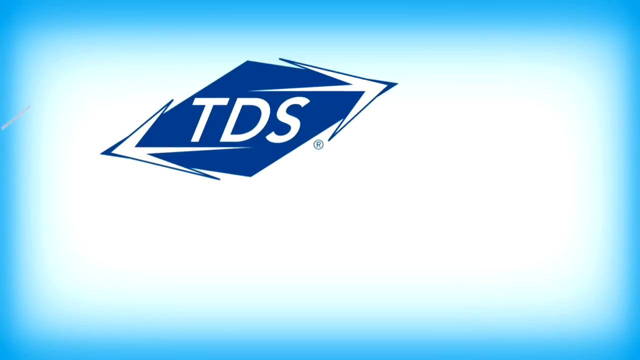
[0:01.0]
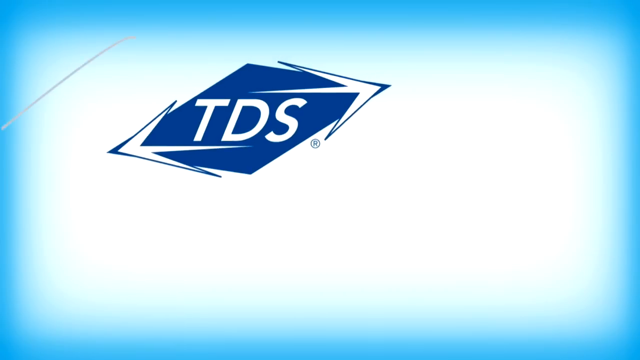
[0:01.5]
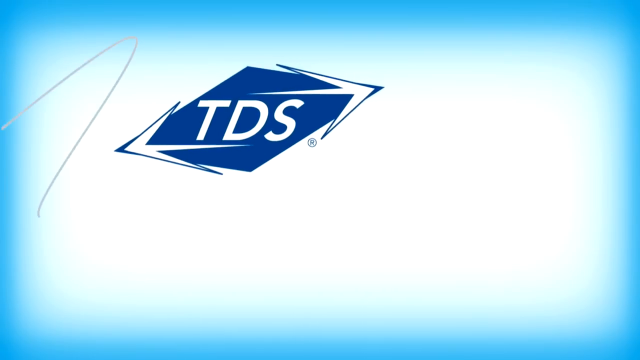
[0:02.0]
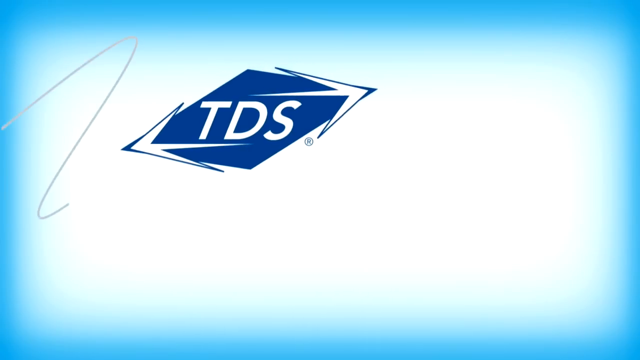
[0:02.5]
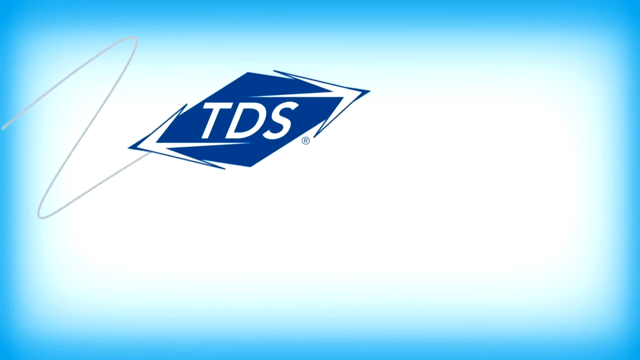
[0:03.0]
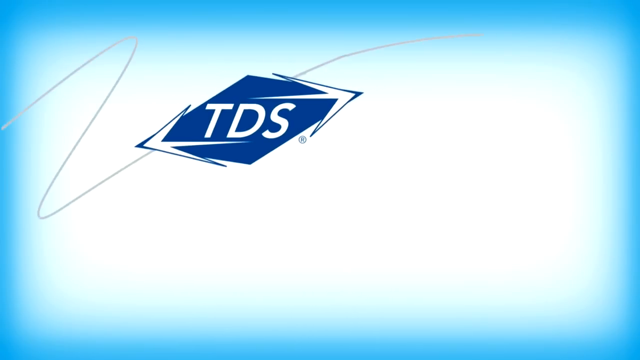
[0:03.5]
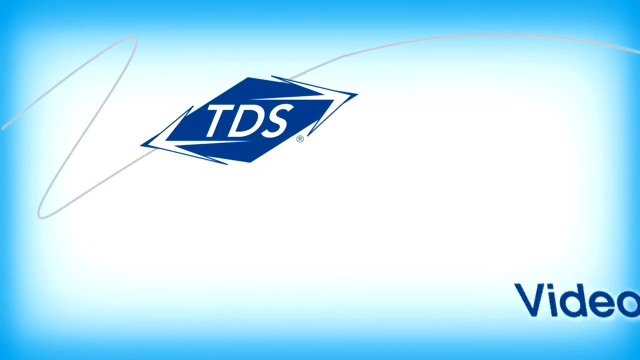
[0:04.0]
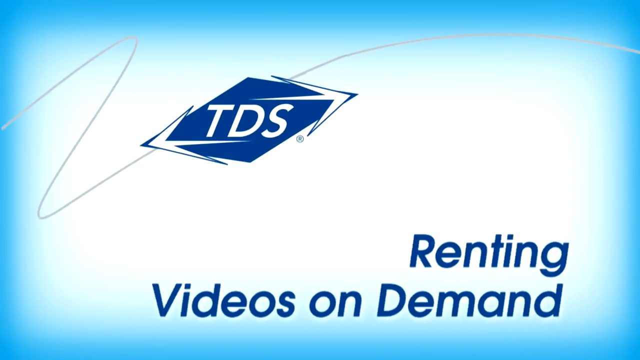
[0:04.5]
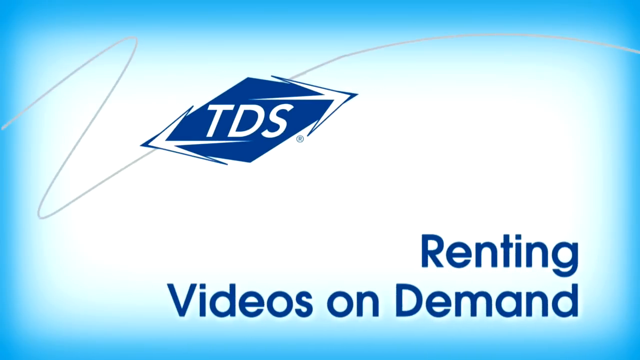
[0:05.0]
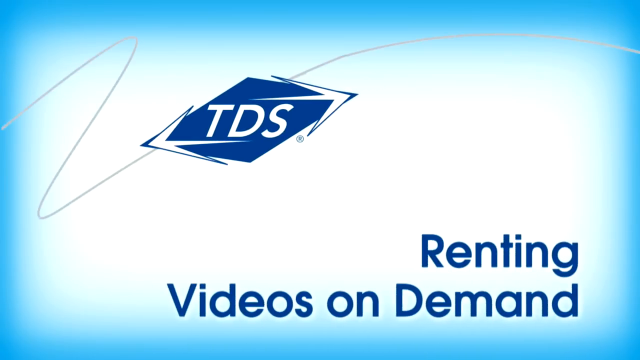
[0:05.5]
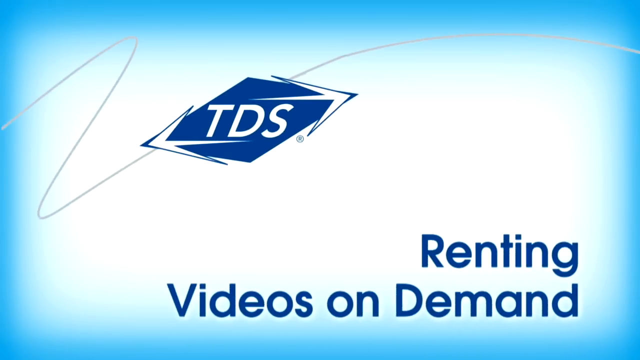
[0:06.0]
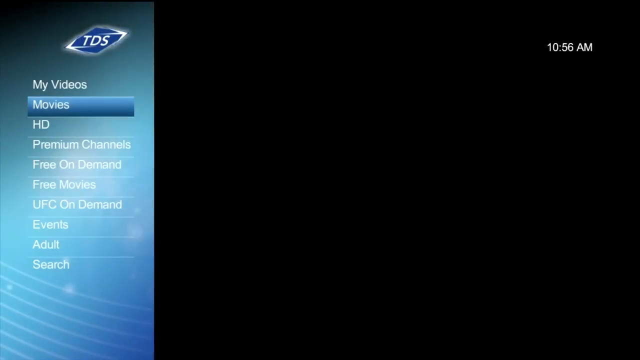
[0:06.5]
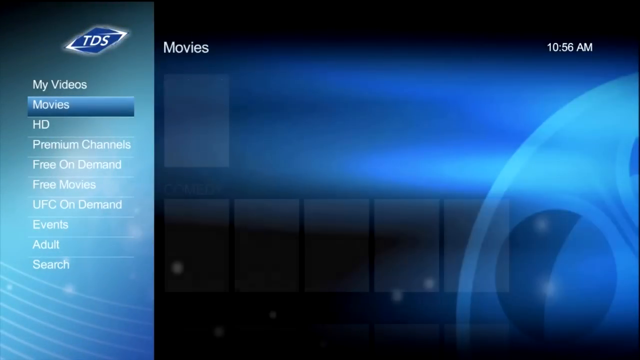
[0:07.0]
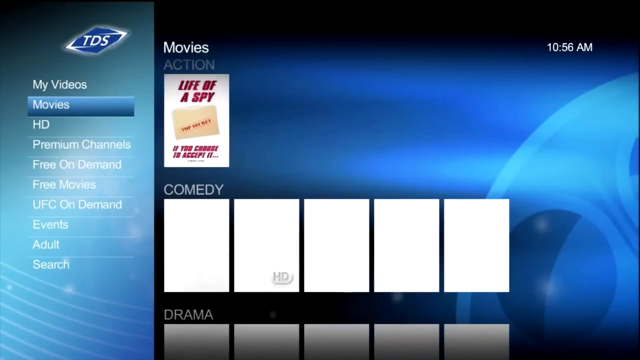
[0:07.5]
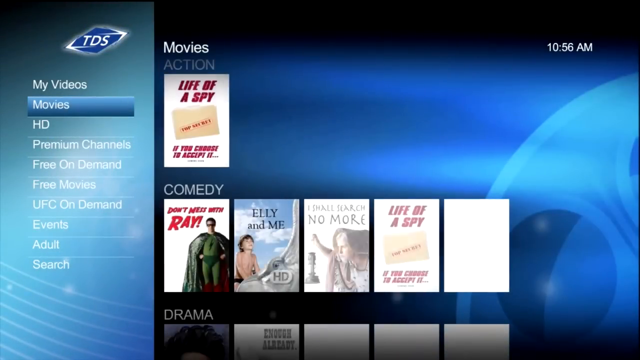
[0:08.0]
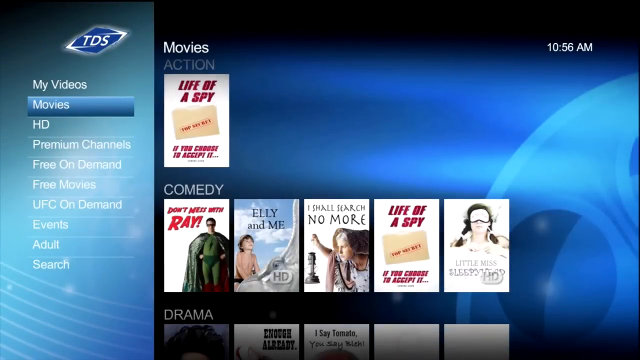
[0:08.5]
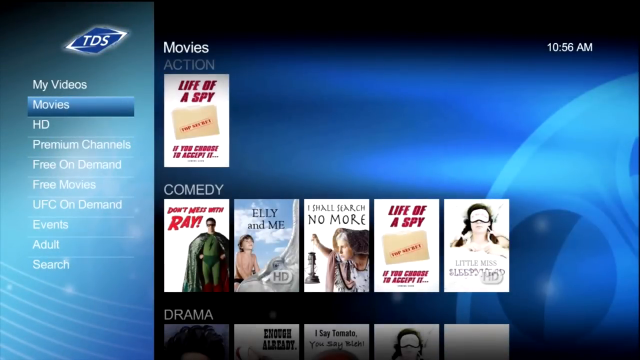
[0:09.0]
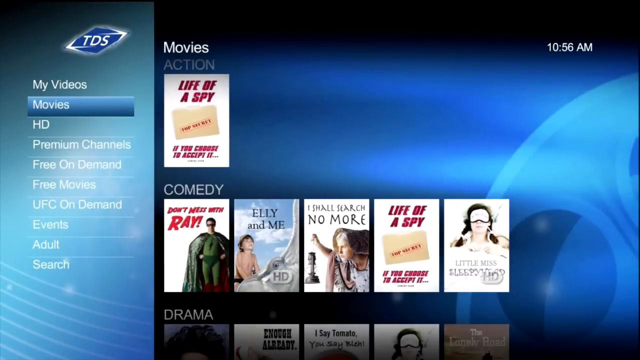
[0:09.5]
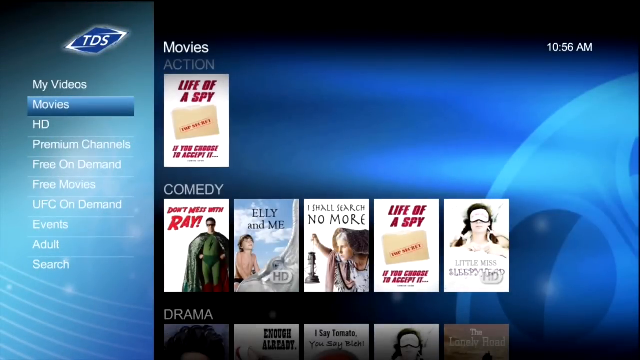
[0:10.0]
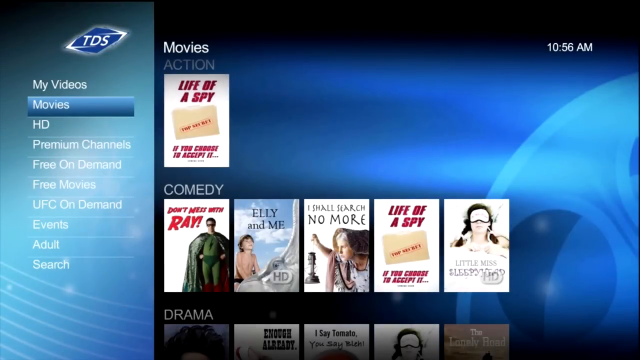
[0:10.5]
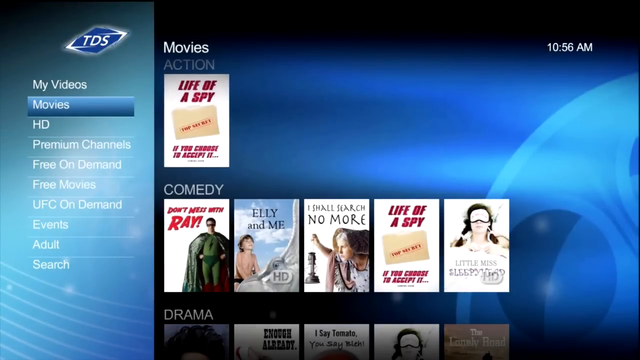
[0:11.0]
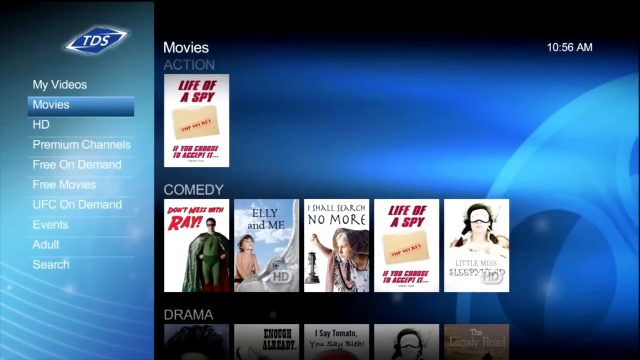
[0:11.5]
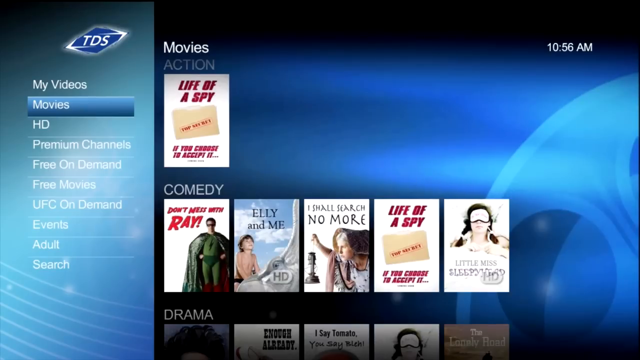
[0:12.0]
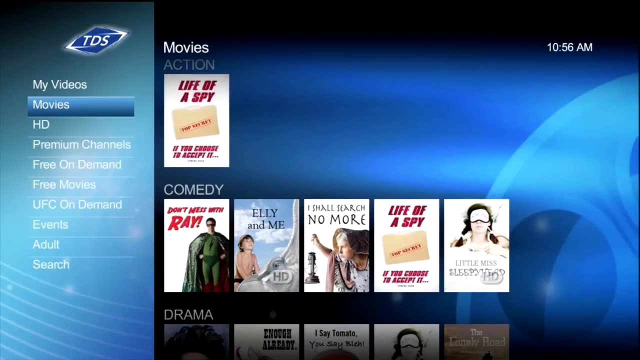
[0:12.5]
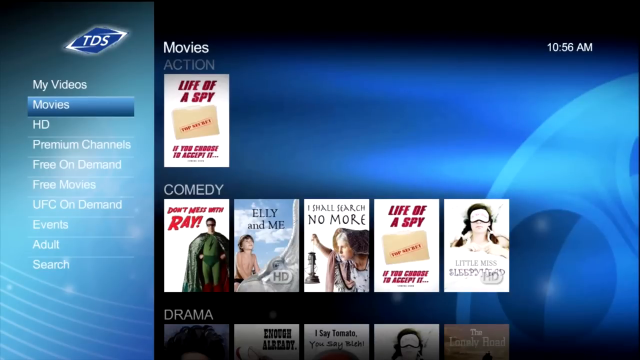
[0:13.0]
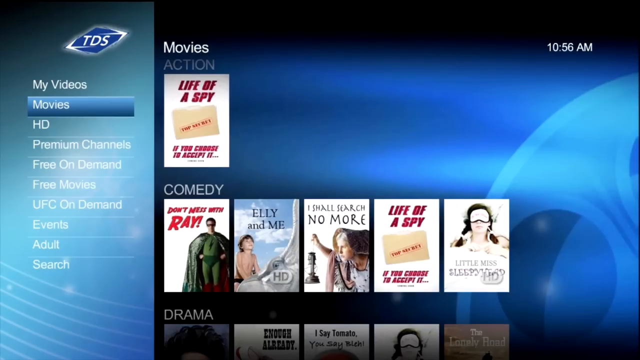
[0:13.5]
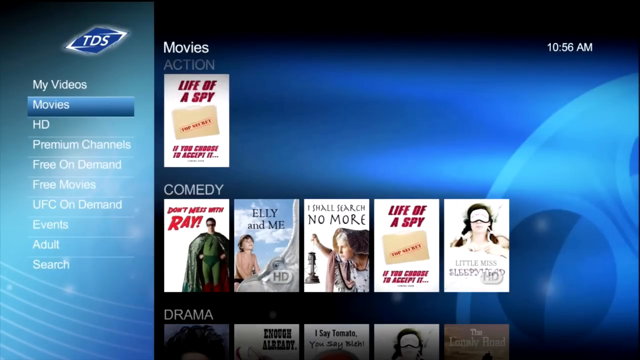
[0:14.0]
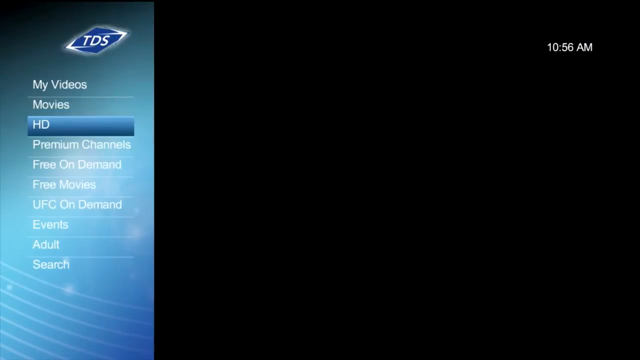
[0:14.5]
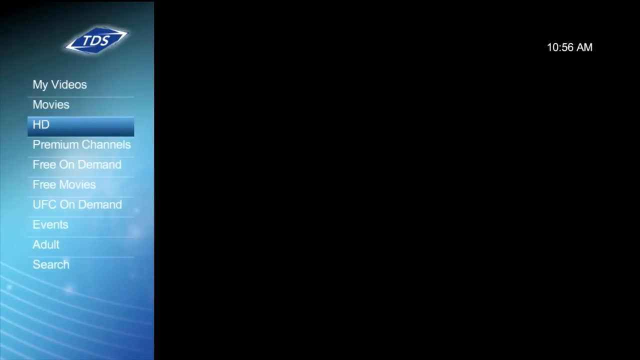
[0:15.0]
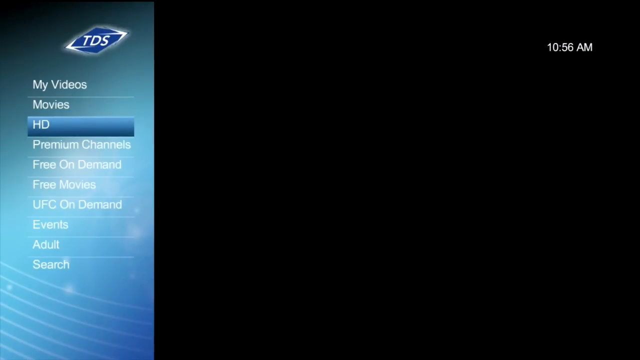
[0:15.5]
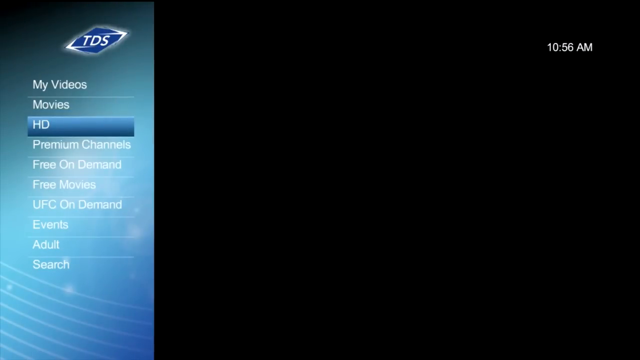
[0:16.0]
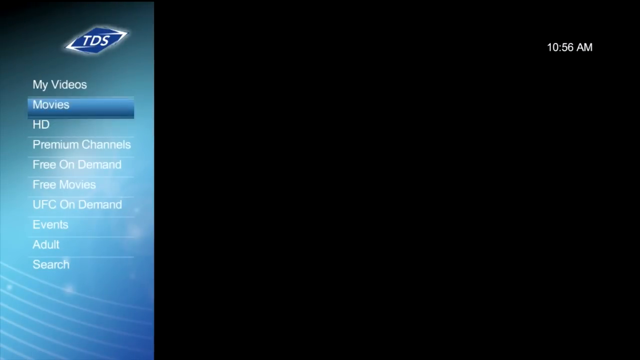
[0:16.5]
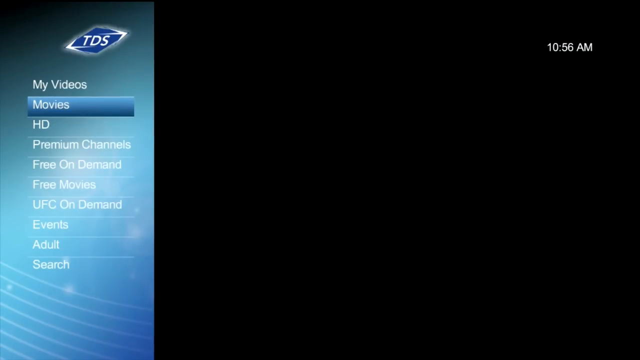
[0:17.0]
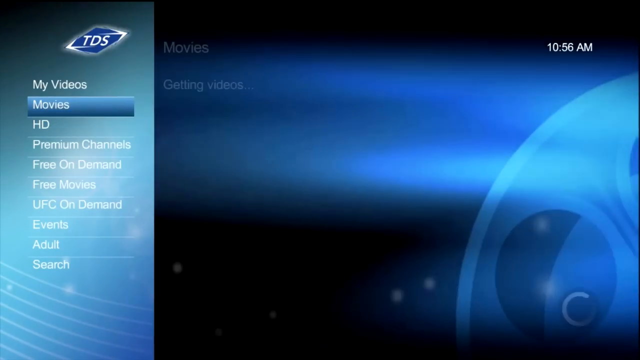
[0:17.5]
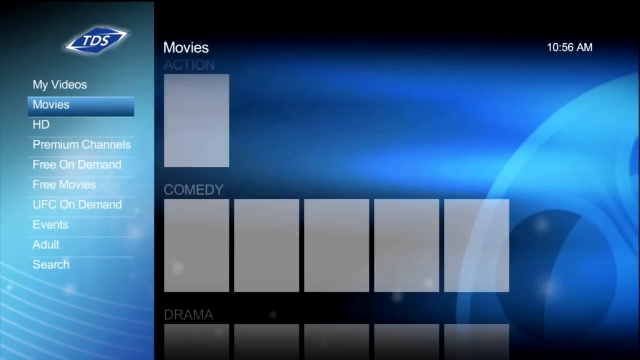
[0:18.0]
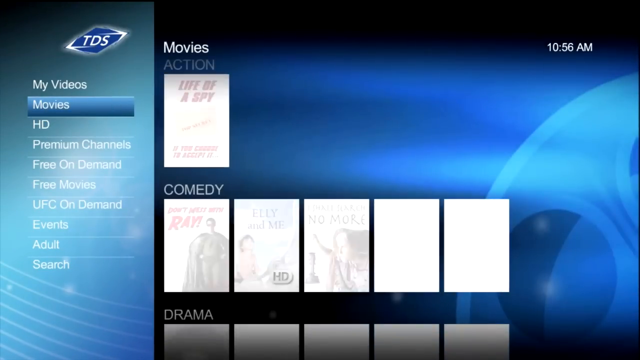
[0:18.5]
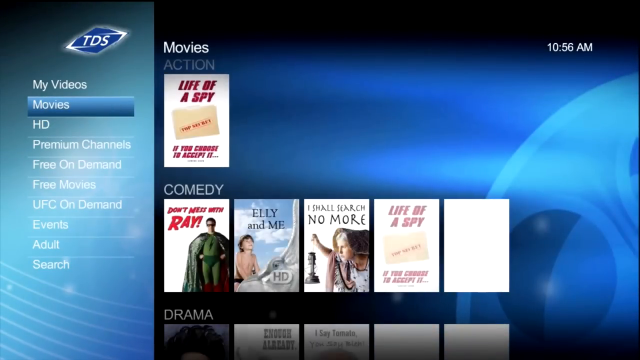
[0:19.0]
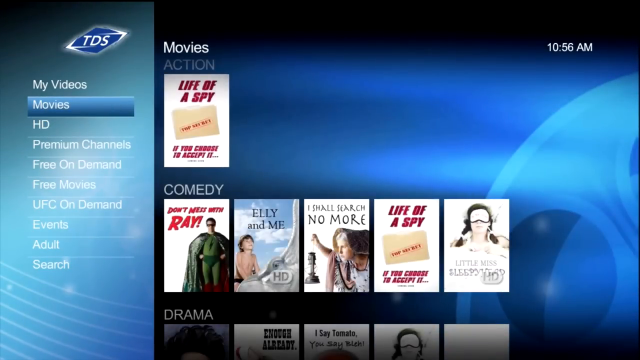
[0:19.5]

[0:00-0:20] The video opens on a logo in the middle left that reads "TDS", with a sort of sideways diamond shape in a bluish color. At the bottom right is the word "renting", and below it the words "videos on demand", also in dark blue. The background is white, though the left, top and right edges have a light blue fade going into the white. The view then switches to a movie section. On the left side is a vertical rectangular box listing several categories, from top to bottom: "my videos", "movies", "HD", "premium channels", "free on demand", "free movies", "UFC on demand", "events", "adult" and "search". To the right of the categories is a much larger open space headed by the word "movies". Below it are subcategories: "action" with only one movie displayed, "life of a spy"; beneath that the comedy category with five movies; and at the very bottom the drama category with five movies of its own. The focus holds there, briefly drops down on the left side, and then returns to the movies section.